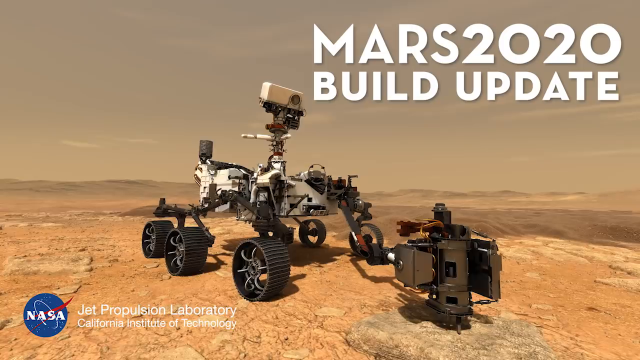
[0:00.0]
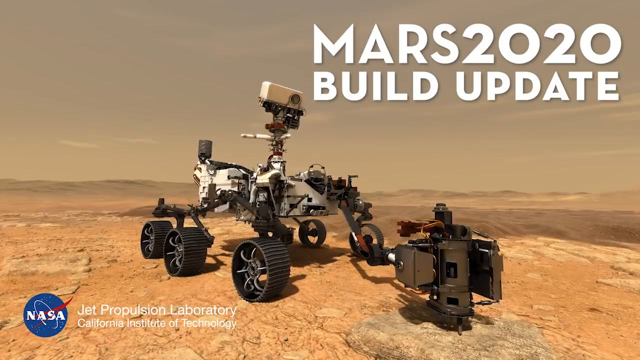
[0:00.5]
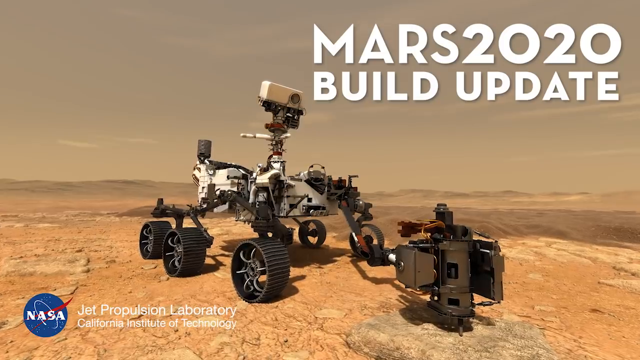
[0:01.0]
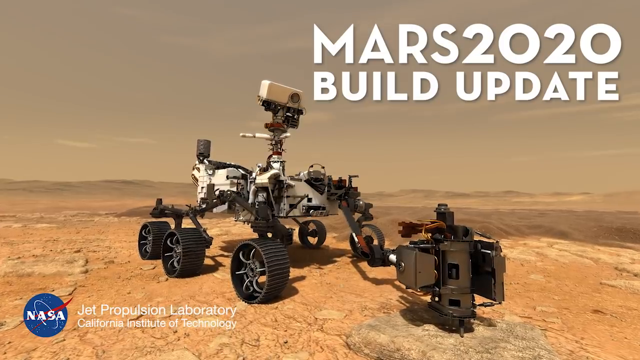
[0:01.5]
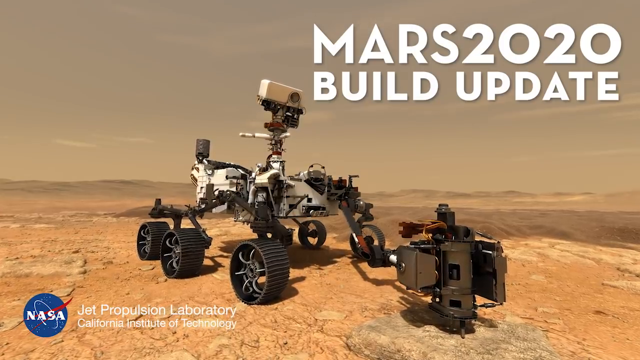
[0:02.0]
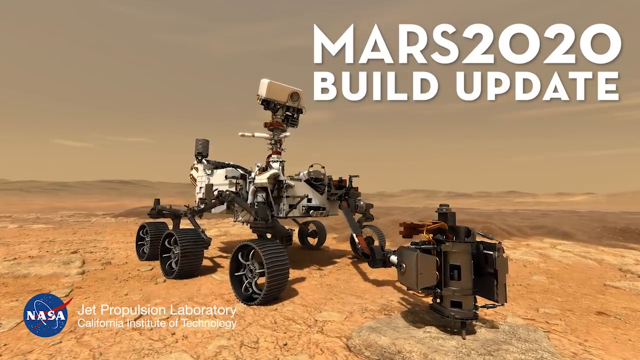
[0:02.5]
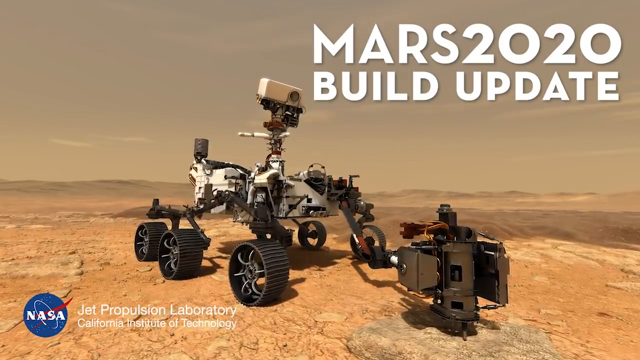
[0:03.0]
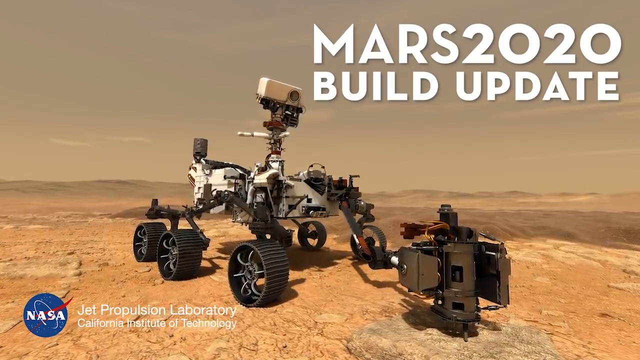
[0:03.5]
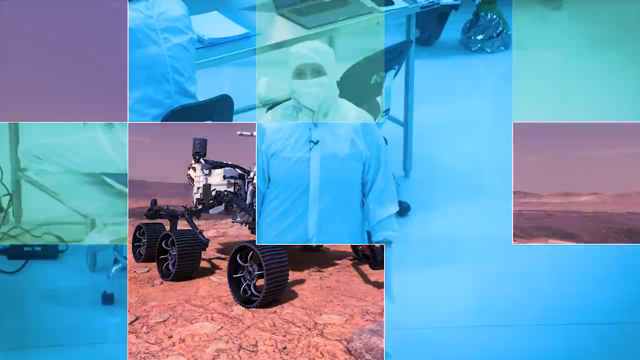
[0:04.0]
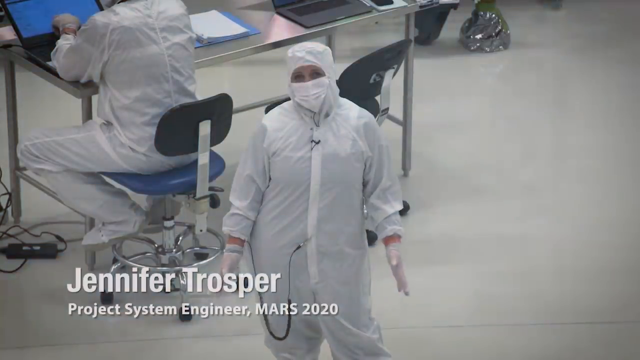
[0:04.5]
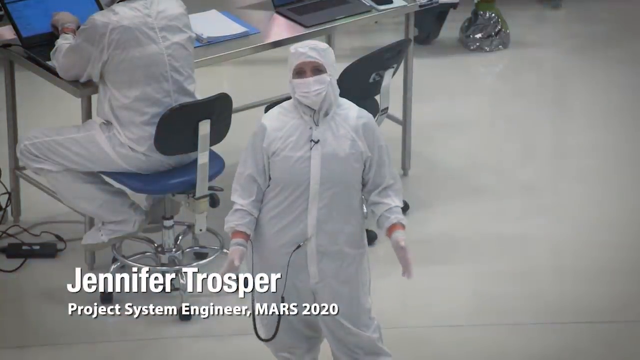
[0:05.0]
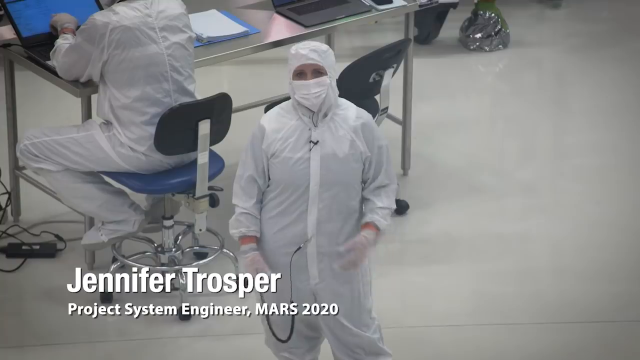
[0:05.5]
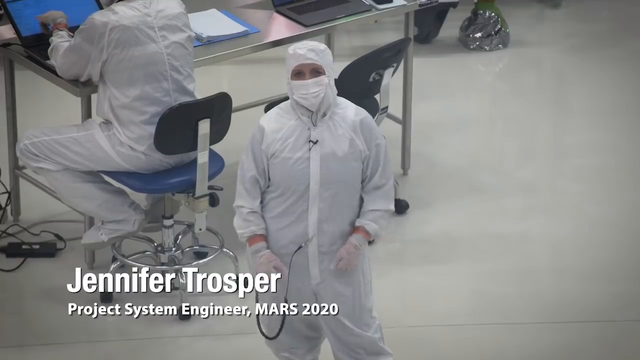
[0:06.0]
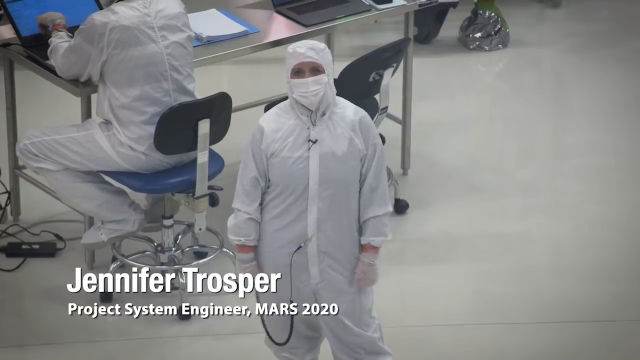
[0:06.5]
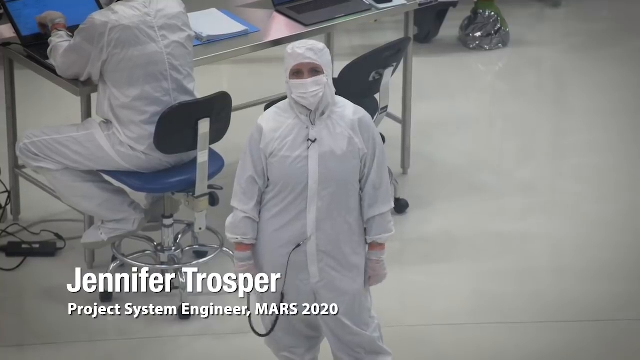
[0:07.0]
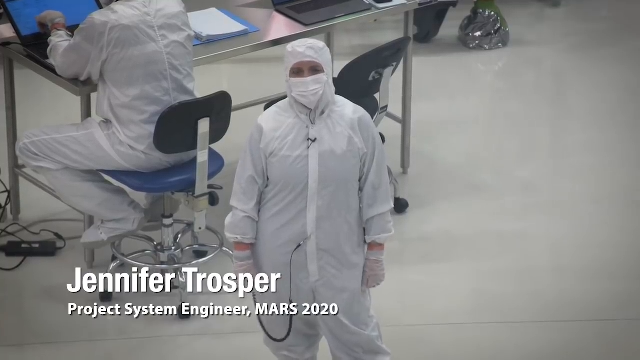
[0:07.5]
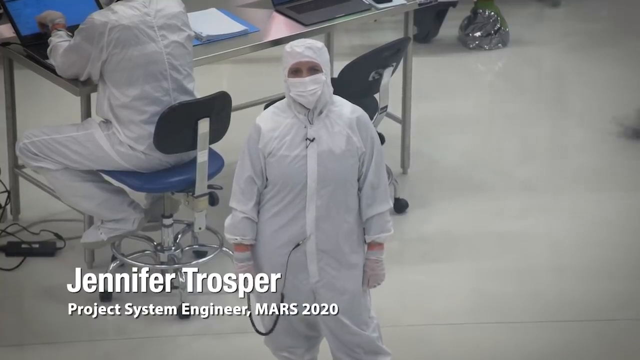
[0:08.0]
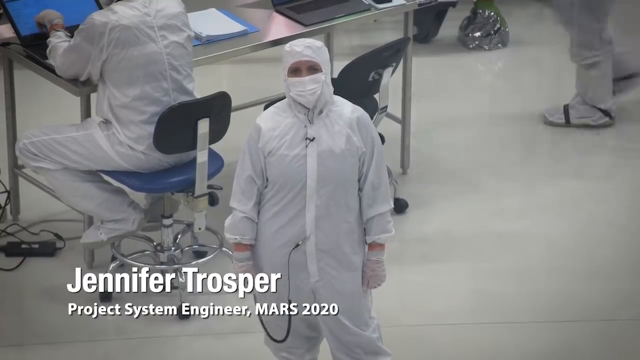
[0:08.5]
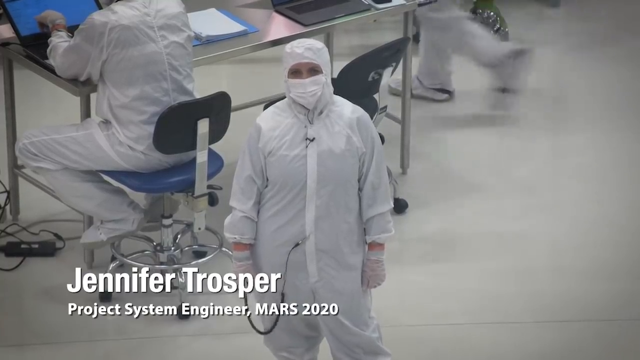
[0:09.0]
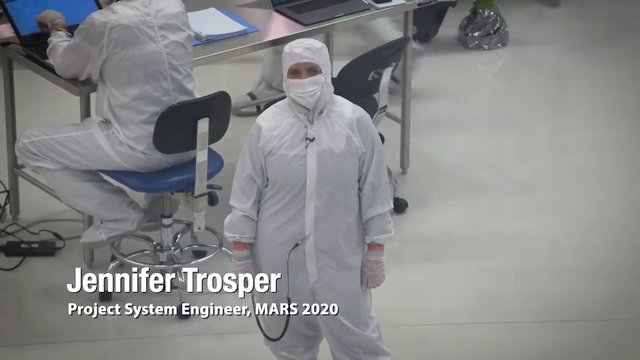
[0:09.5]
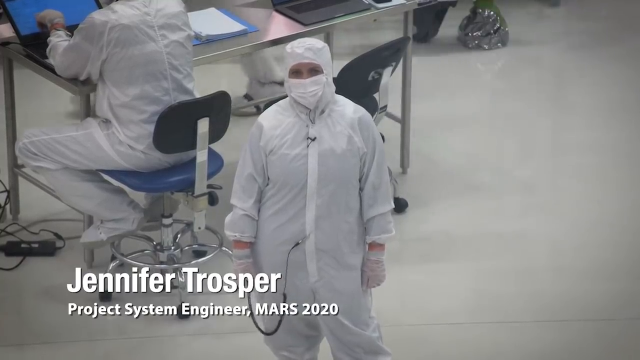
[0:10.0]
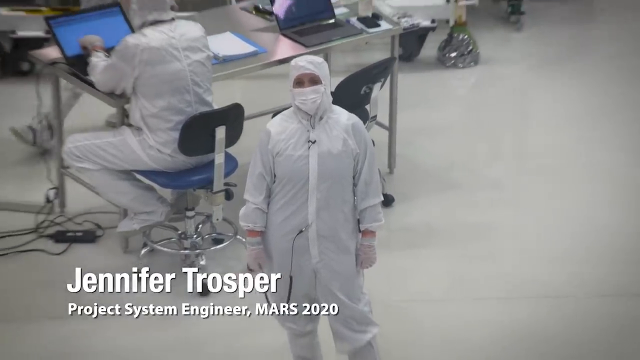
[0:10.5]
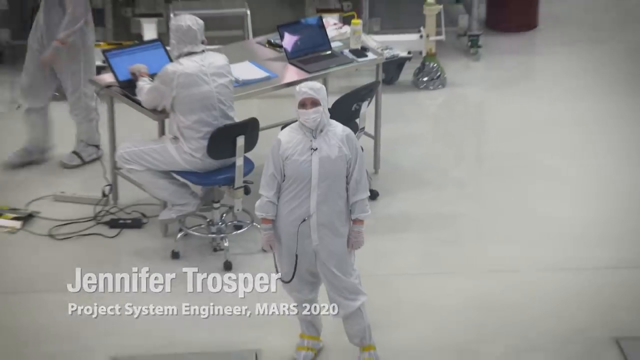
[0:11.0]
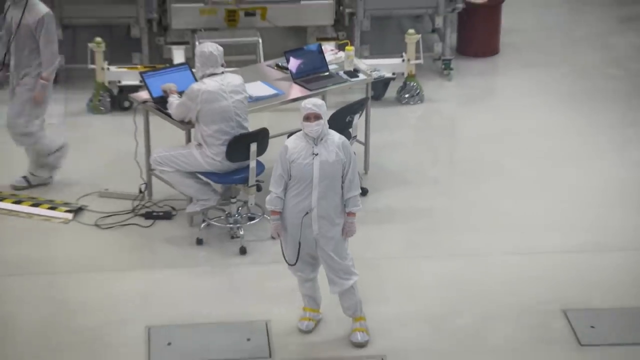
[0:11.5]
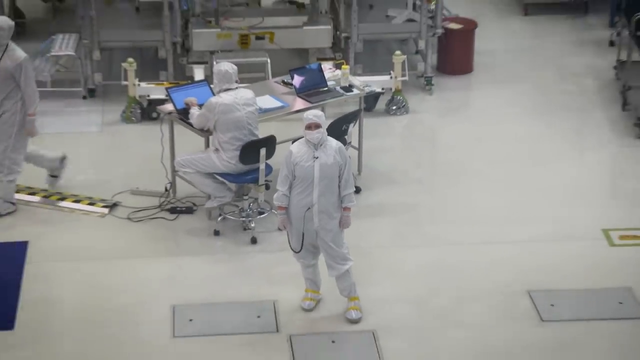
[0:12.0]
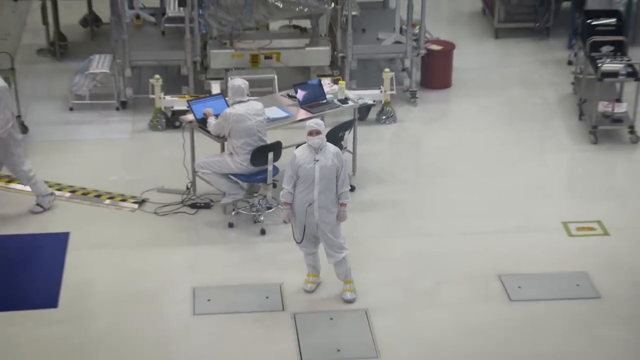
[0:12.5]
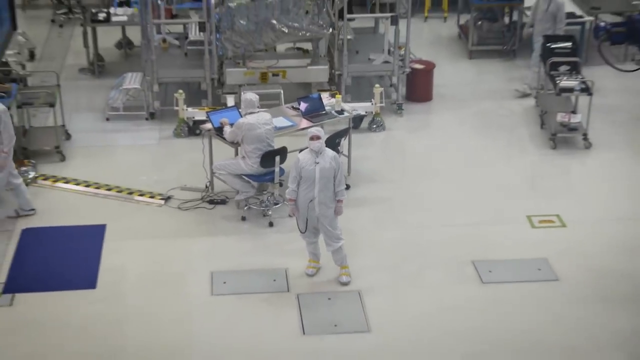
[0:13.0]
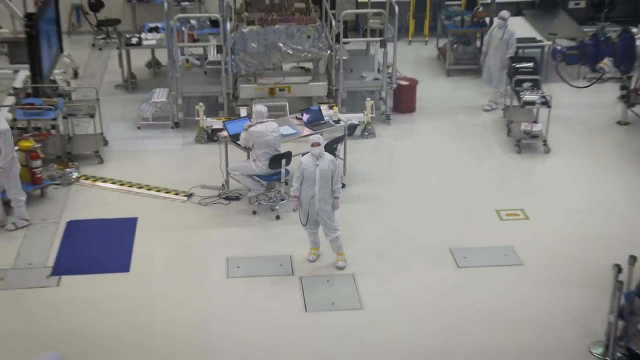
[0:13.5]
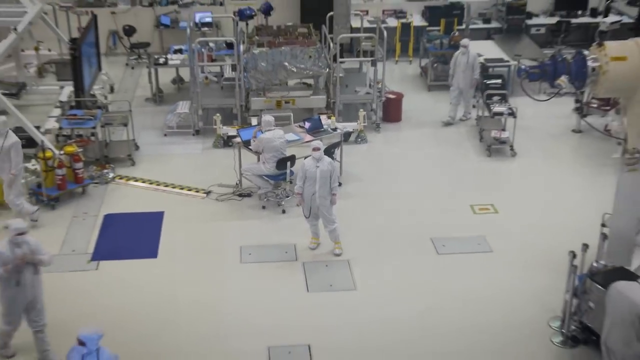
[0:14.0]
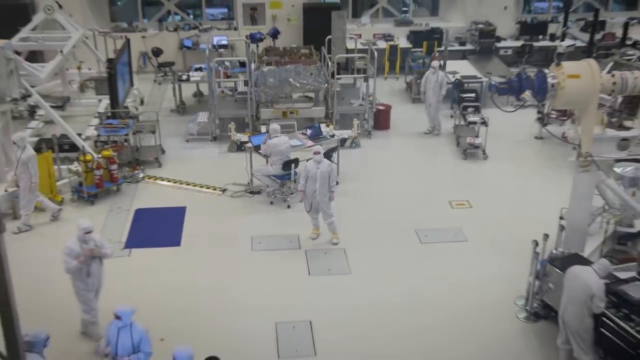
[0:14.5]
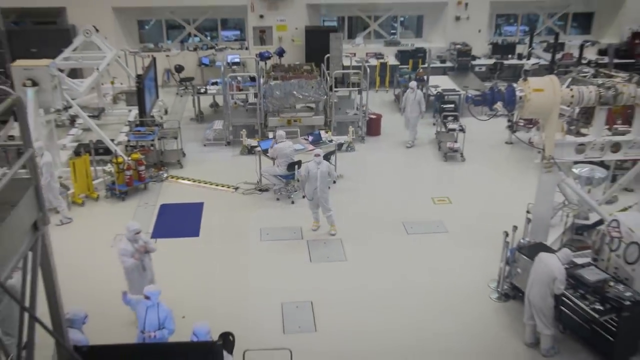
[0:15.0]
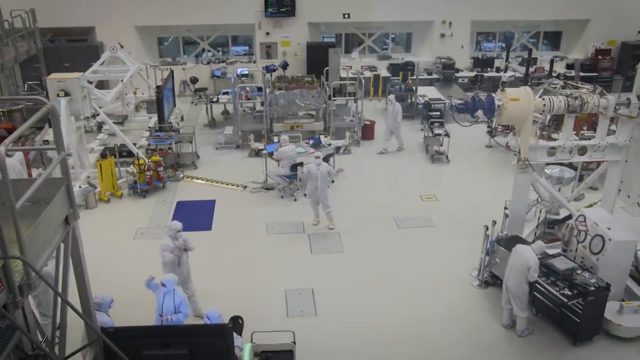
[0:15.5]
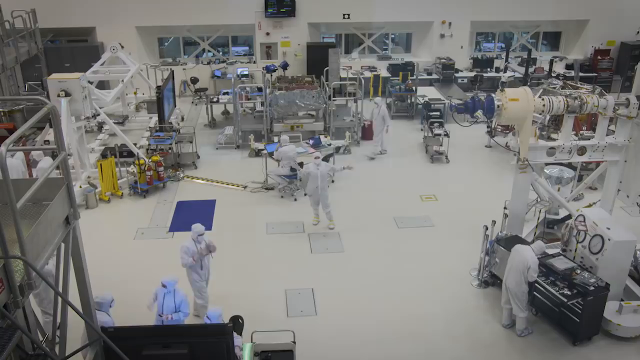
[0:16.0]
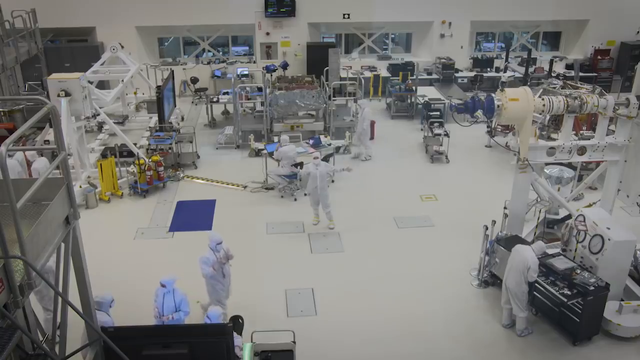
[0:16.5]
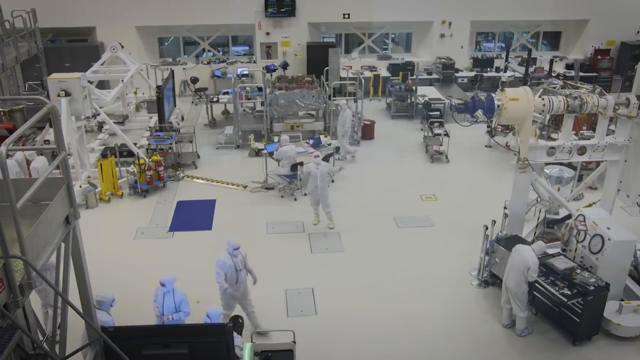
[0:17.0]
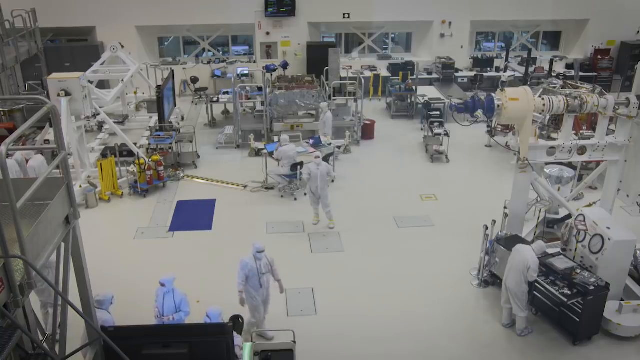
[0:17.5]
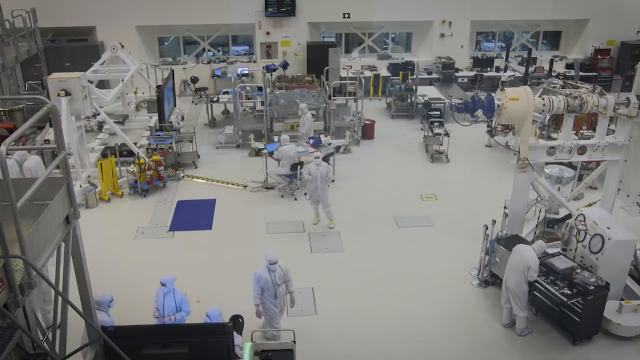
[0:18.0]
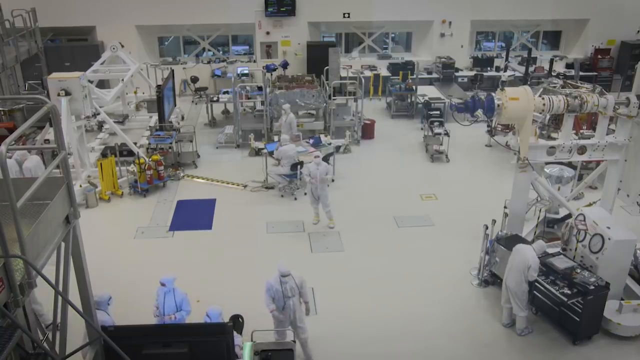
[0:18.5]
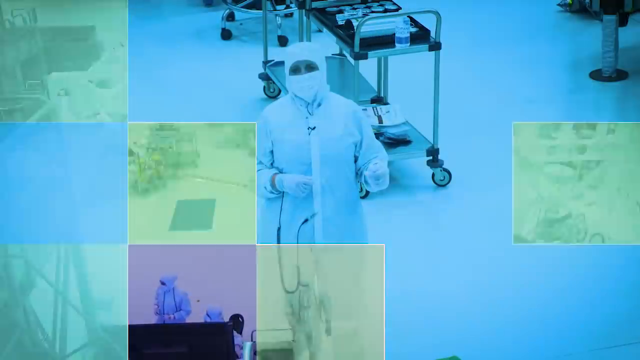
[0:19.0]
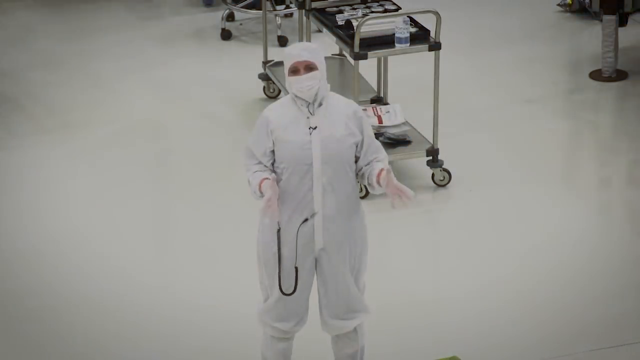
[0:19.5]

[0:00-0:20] The title at the top of the page reads "Mars 2020 rover build update." The video opens on an image of the Mars rover on Mars, then switches to a woman standing in a clean suit inside a warehouse-type work area where scientists sit around working on computers; this is most likely the facility used to design and build the Mars rover or similar vehicles. Text reads "Mars 2020 build update" and identifies the speaker as Jennifer Trosberg, one of the engineers on the Mars 2020 project. Everyone in the work area wears a clean suit: a white jumpsuit covering them from feet to head, including their hands, mouths and heads, with only a small slit left open for the eyes.